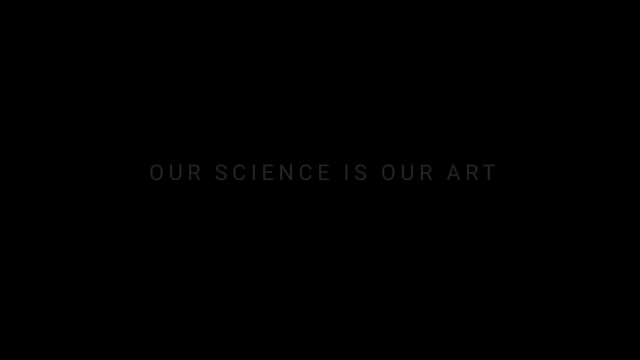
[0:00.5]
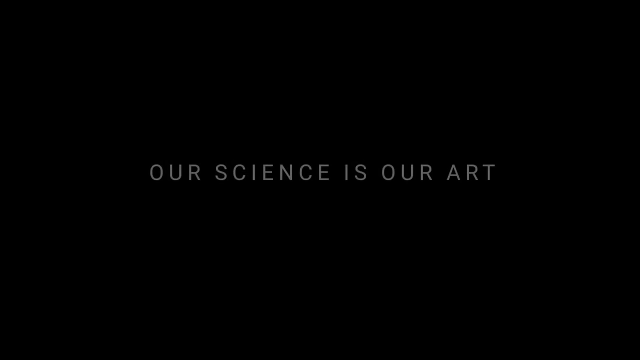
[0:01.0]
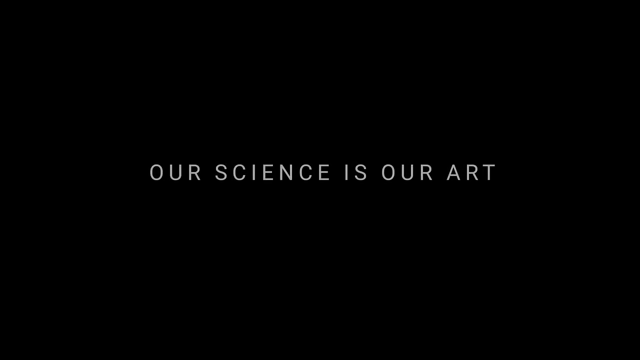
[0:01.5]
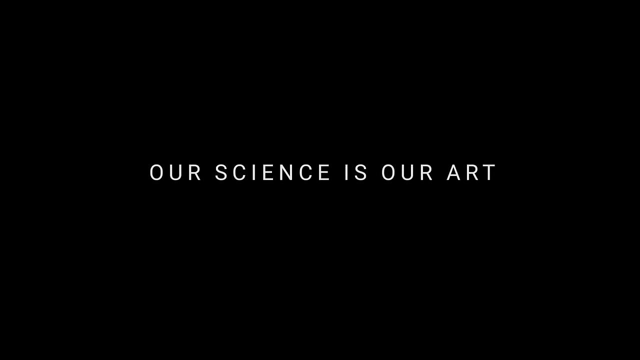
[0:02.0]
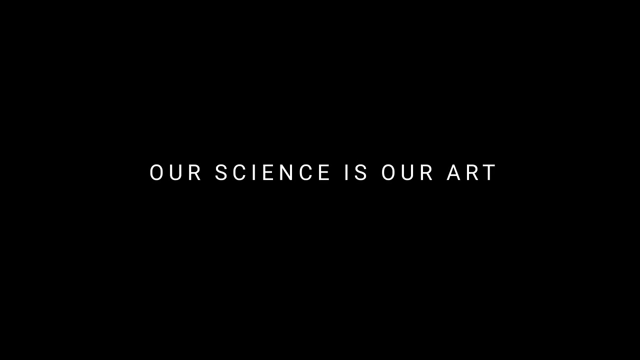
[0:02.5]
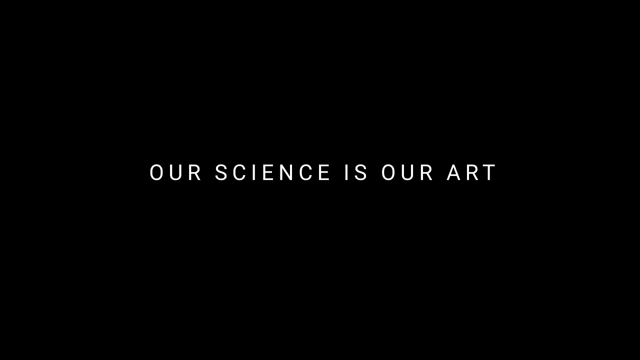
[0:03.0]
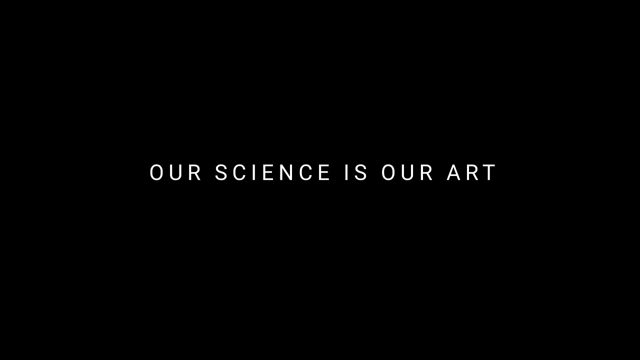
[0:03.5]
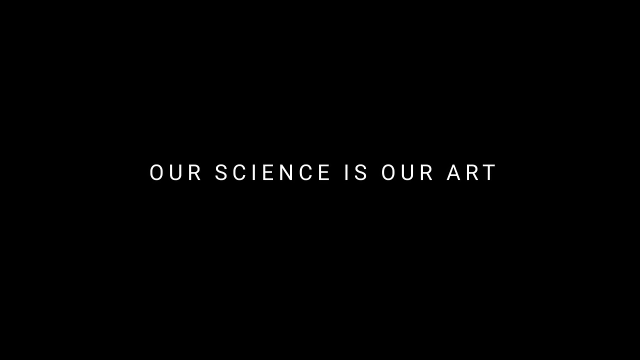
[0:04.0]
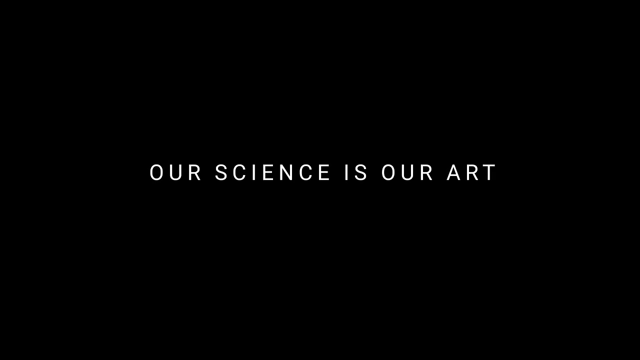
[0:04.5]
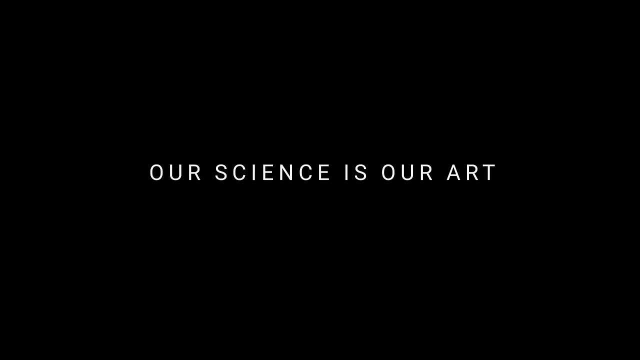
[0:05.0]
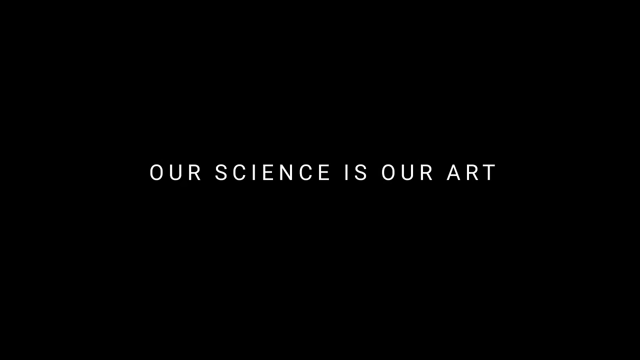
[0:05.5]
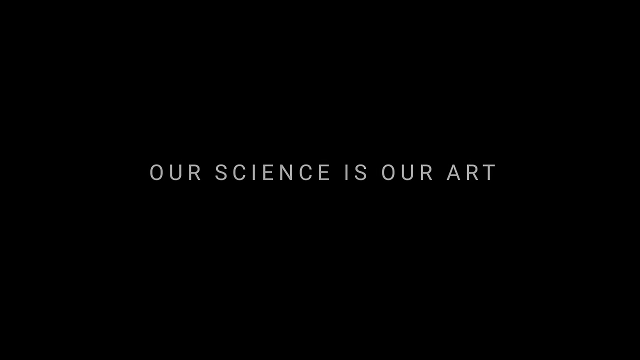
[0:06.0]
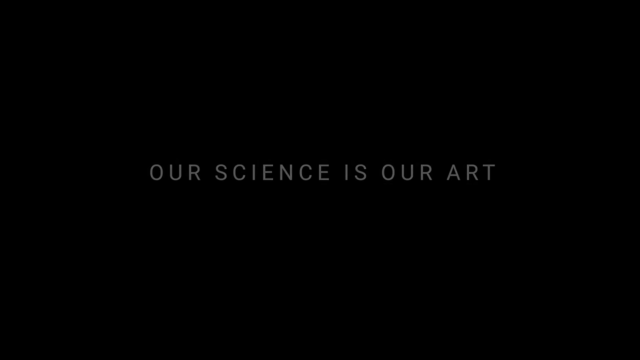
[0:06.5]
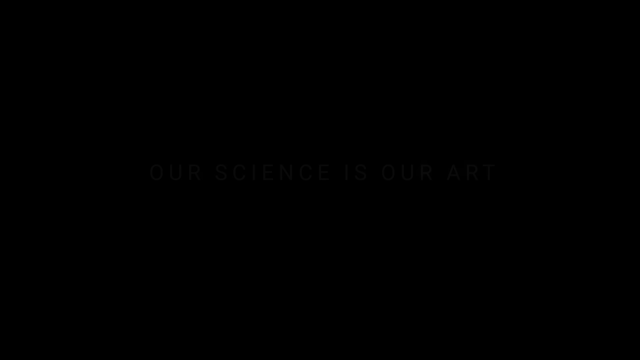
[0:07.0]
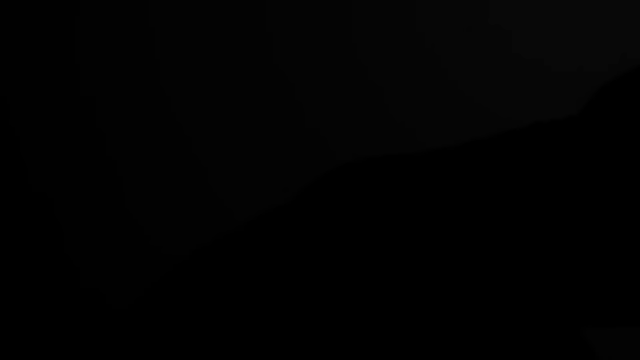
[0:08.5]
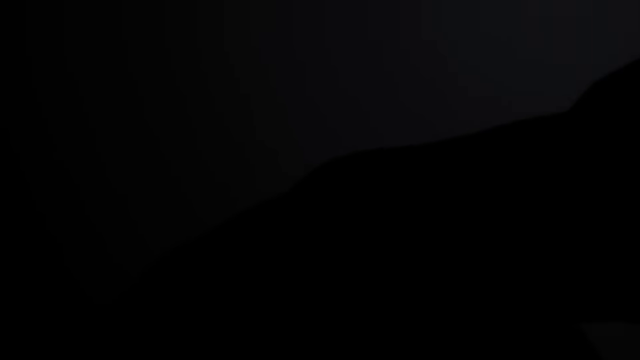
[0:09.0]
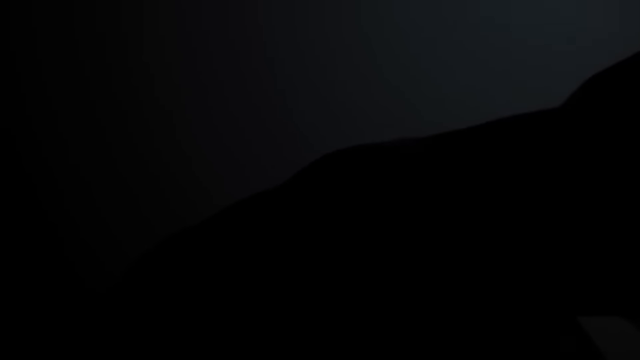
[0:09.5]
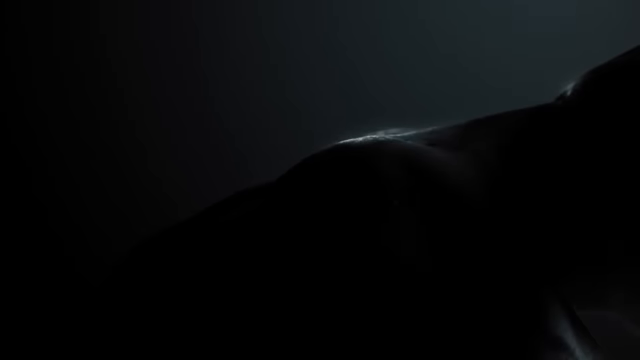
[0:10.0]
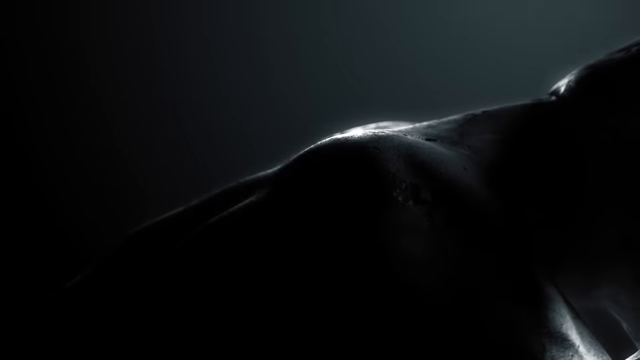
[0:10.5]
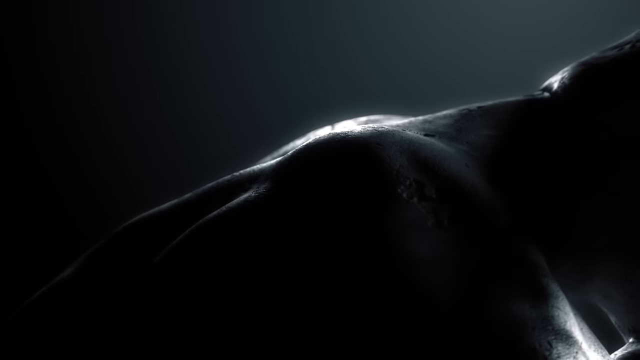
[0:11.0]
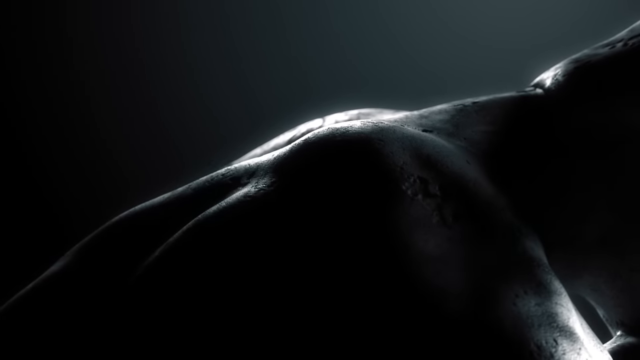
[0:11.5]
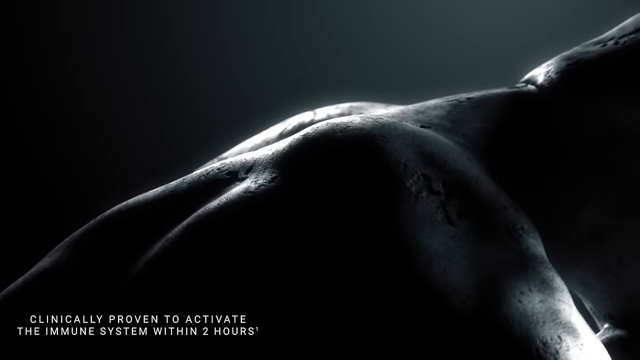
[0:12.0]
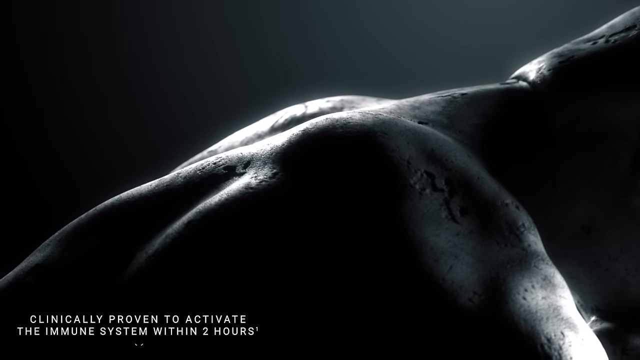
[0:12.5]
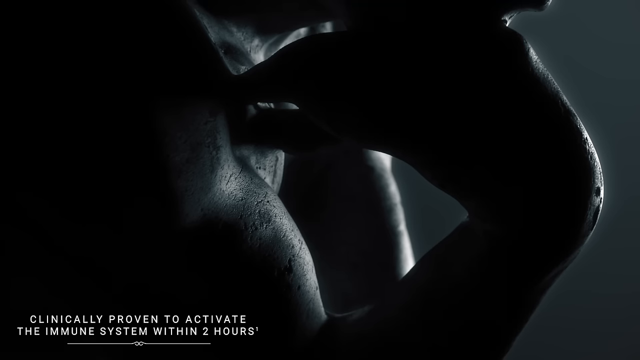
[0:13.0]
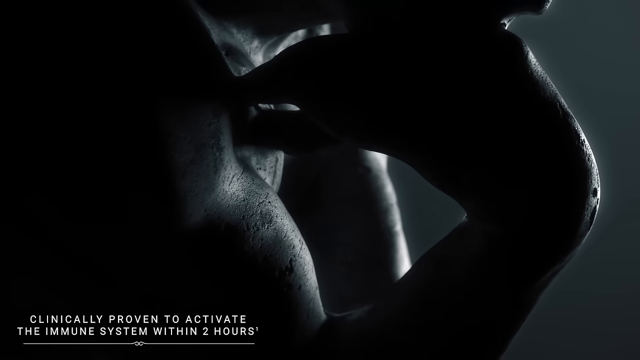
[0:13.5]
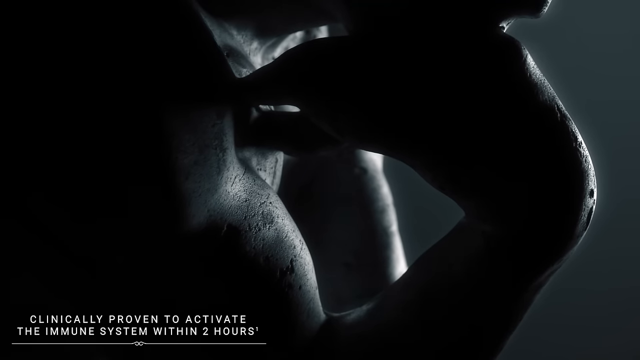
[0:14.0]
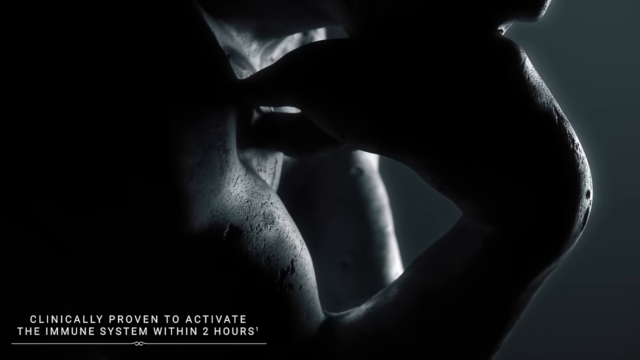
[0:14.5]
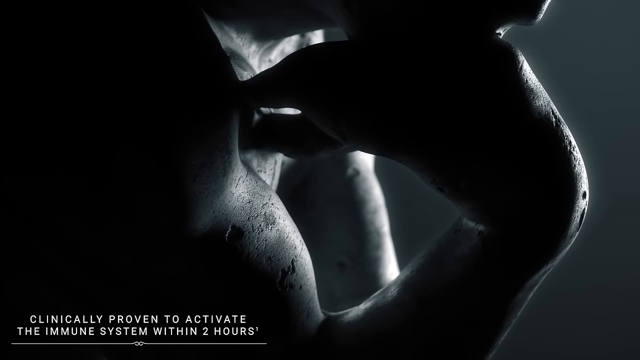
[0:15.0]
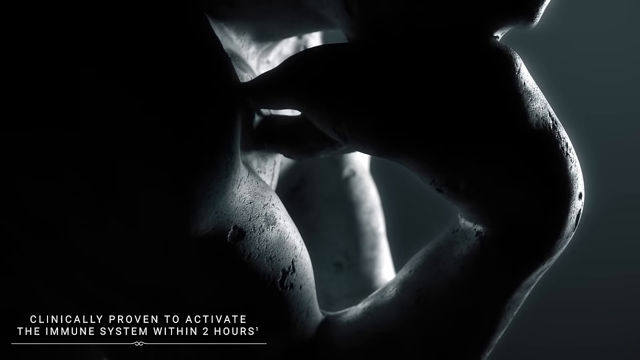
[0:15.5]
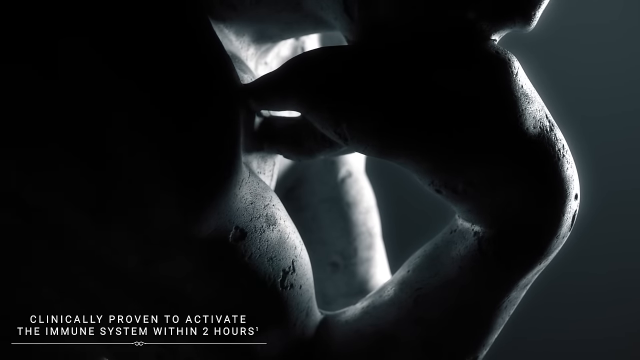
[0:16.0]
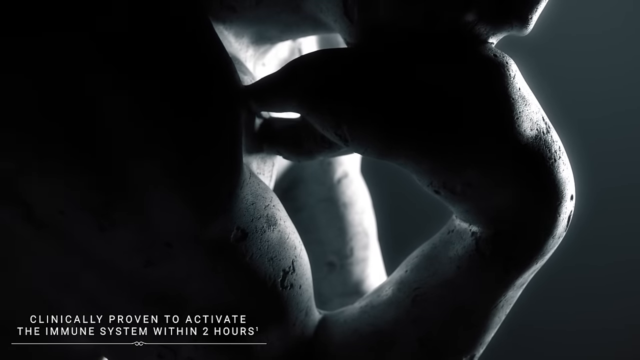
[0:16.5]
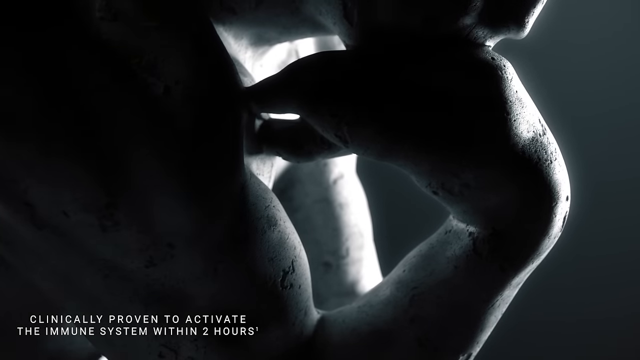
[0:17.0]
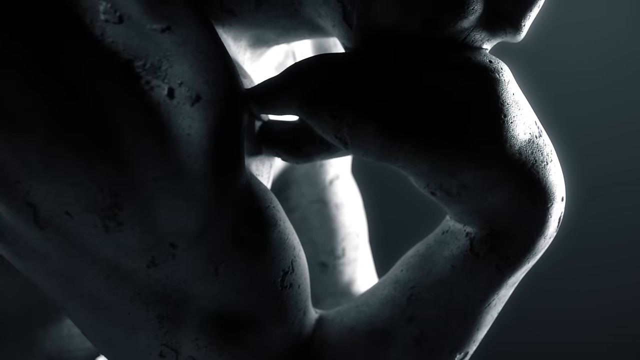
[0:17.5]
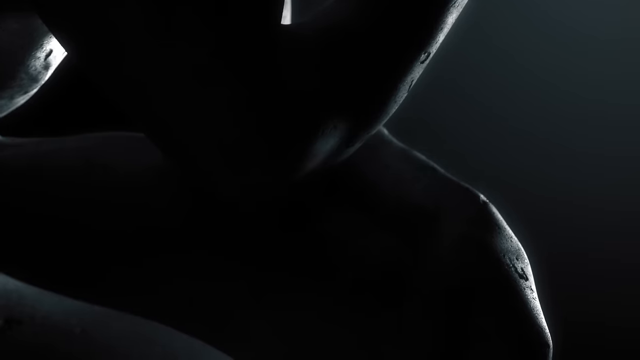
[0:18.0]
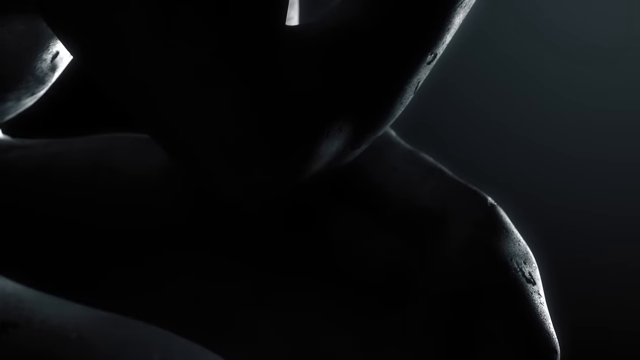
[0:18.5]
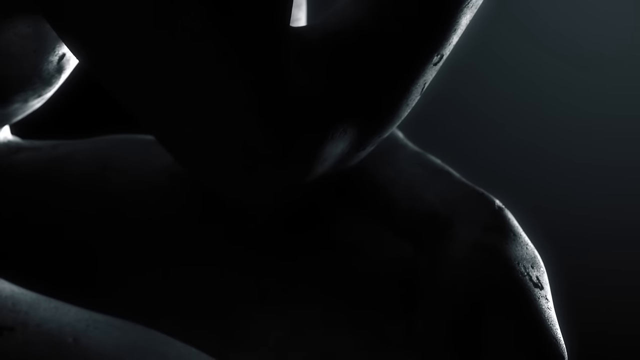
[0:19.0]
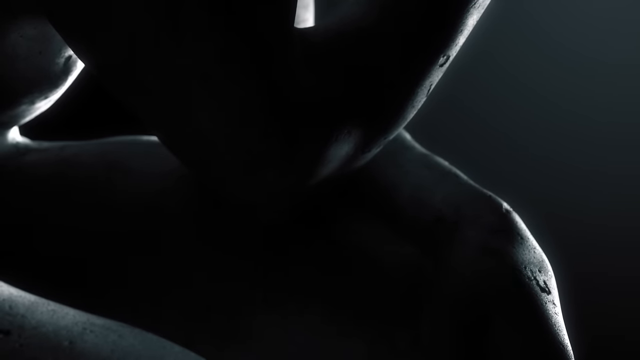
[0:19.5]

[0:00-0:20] The video opens on a dark black screen as text wipes into the image, reading "our science is our art." An image then slowly fades in of a muscular body beginning to appear, while text in the bottom left-hand corner reads "clinically proven to activate the immune system within two hours." The muscular figure appears to be sitting in a Thinker-style pose, with the wrist bent, the chin leaning on the top of the hand, and the body hunched rather far forward in a contemplative look. The shot is very close up, so the muscle definition is visible, but it does not give a whole view of the figure or its pose.